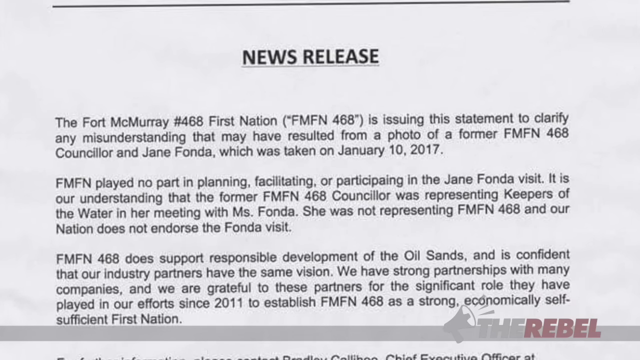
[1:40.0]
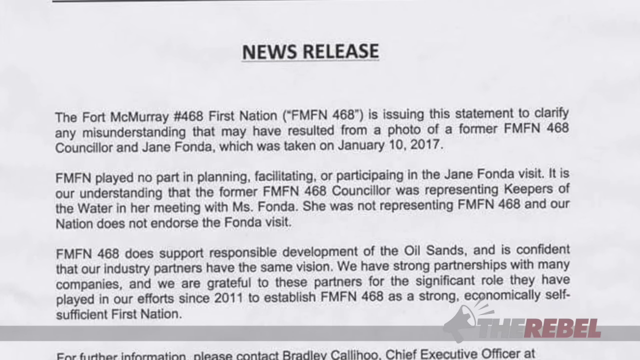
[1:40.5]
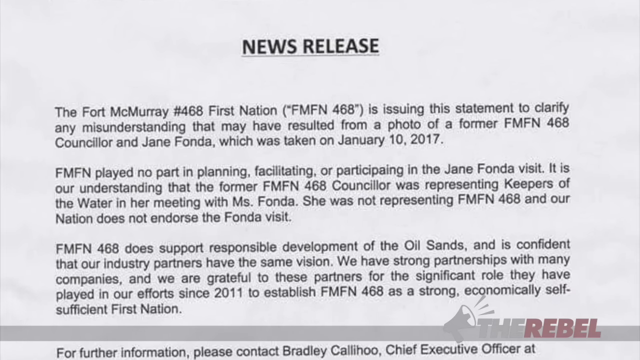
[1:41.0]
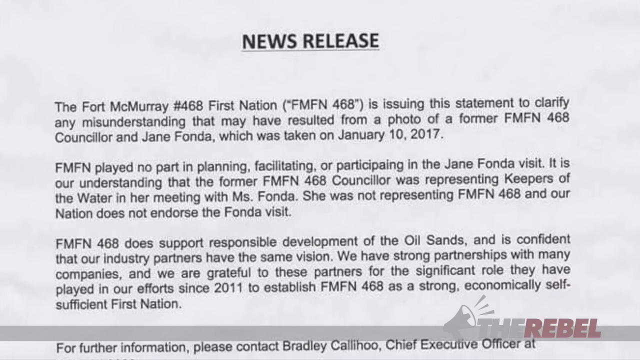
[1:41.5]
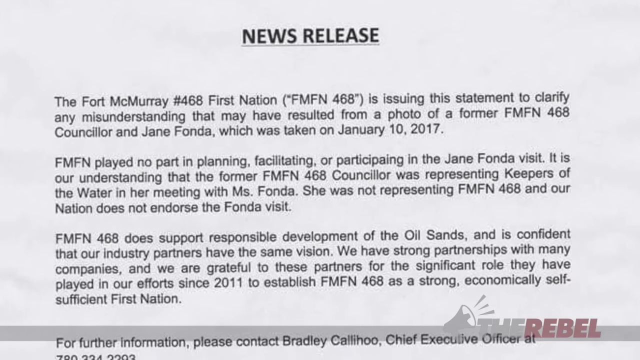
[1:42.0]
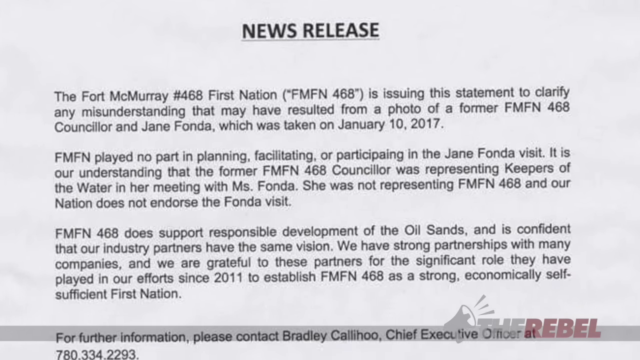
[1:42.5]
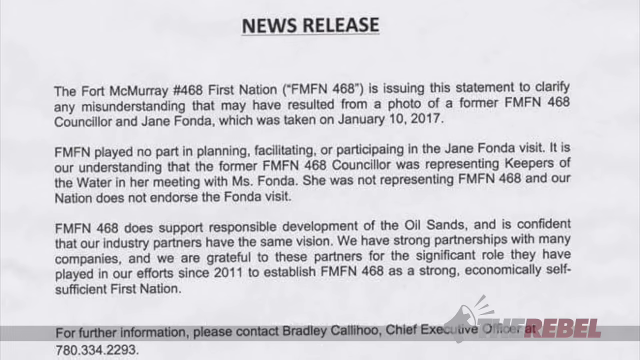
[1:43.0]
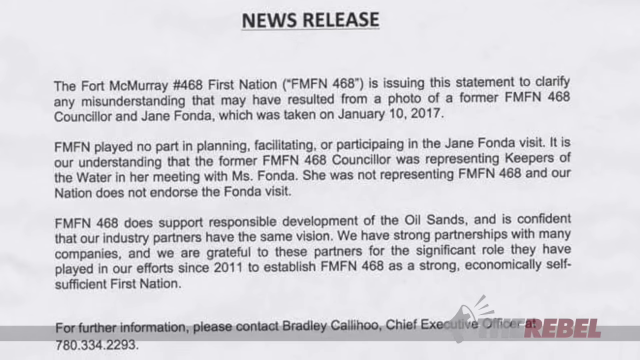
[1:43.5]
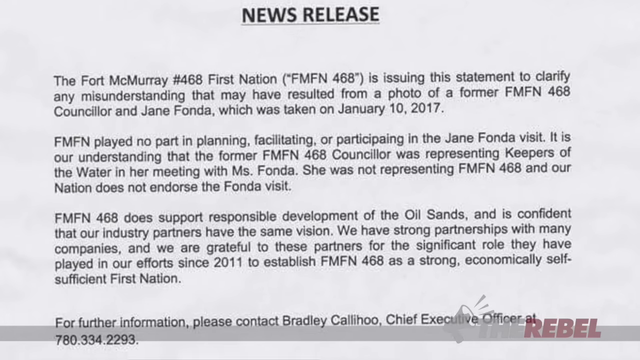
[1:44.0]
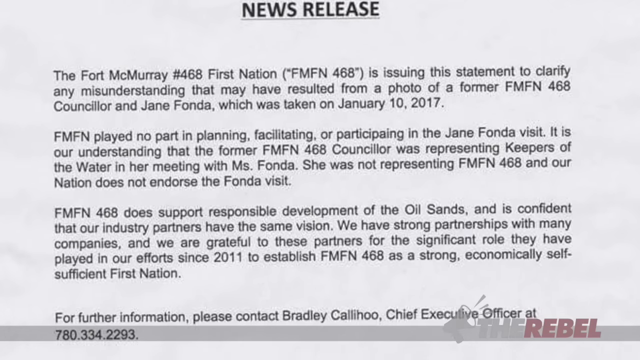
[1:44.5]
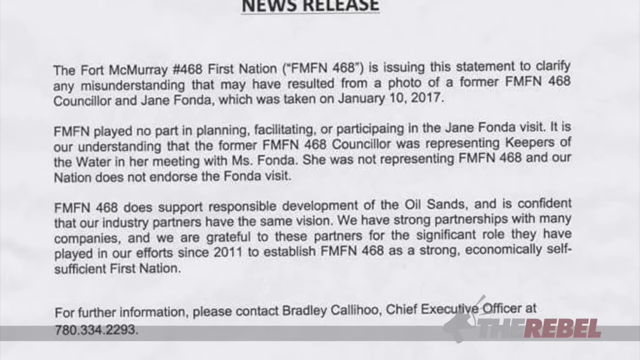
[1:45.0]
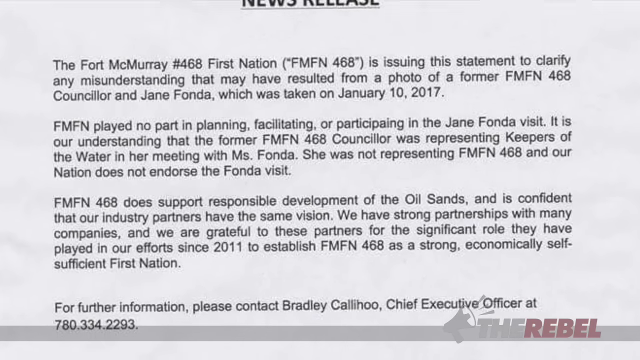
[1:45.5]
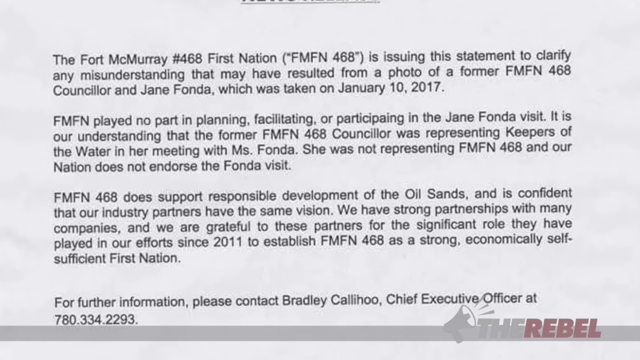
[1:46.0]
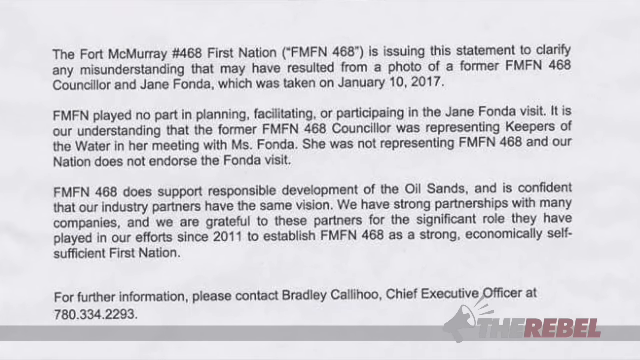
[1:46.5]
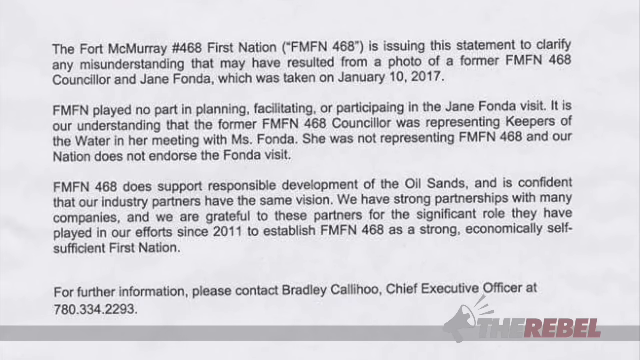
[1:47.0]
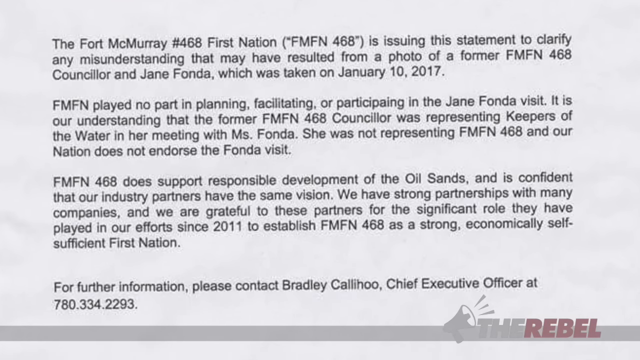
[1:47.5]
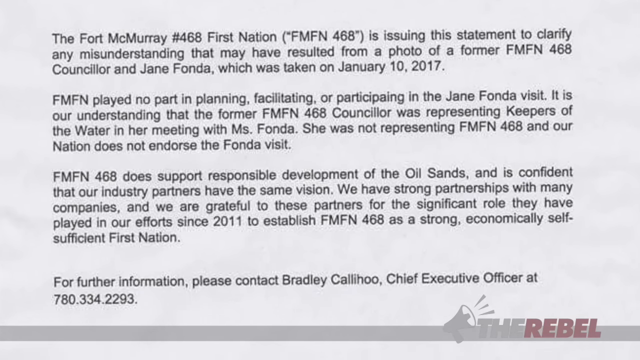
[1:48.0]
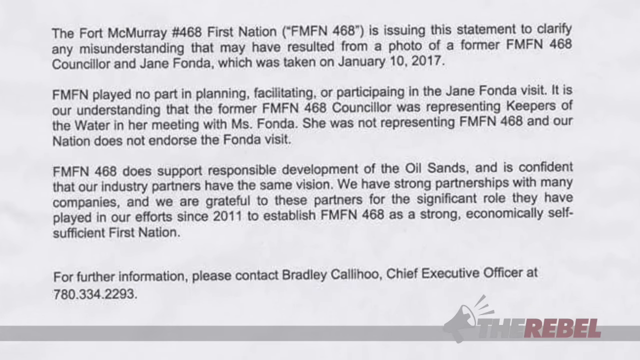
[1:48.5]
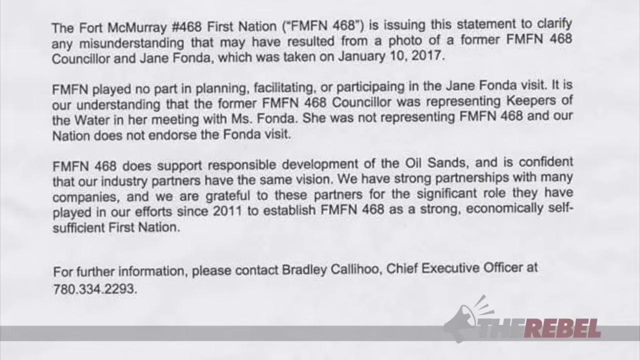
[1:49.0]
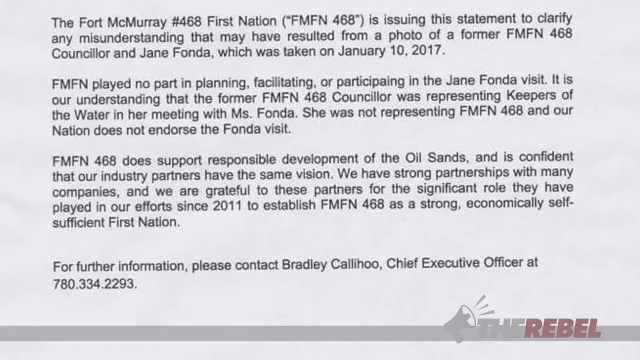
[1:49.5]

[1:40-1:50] The document continues, stating that FMFN 468 does support responsible development of the oil sands and is confident its industry partners have this ambition, that it has strong partnerships with many companies, and that it is grateful to these partners for the significant role they have played in its efforts since 2011 to establish FMFN 468 as a strong, economically self-sufficient First Nation. For further information it lists Bradley Kalihu, Chief Executive Officer, at 7803342293. The Rebel logo then appears in the bottom right of the screen with the amplifier icon right next to it.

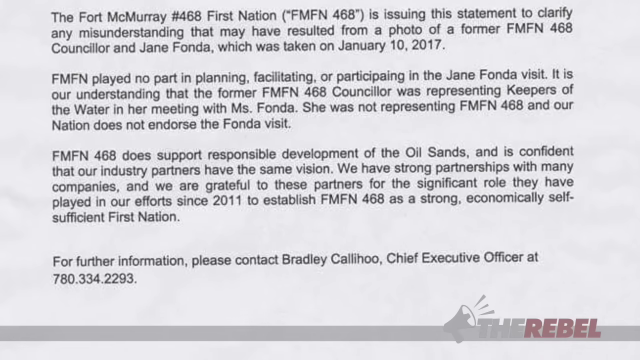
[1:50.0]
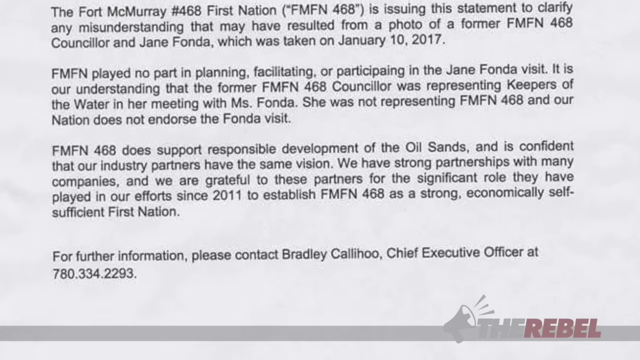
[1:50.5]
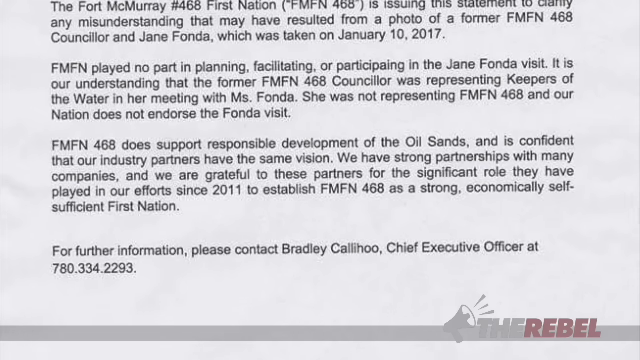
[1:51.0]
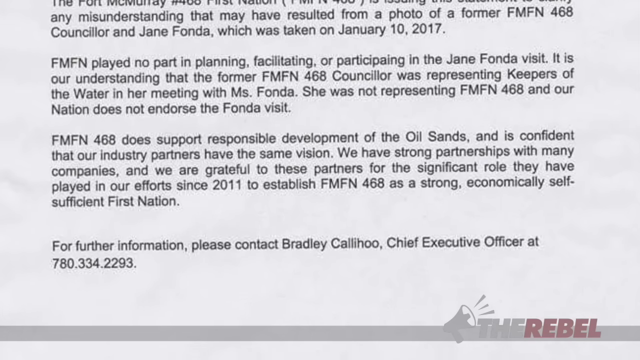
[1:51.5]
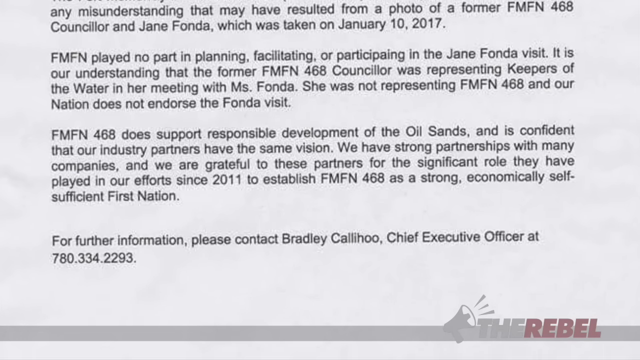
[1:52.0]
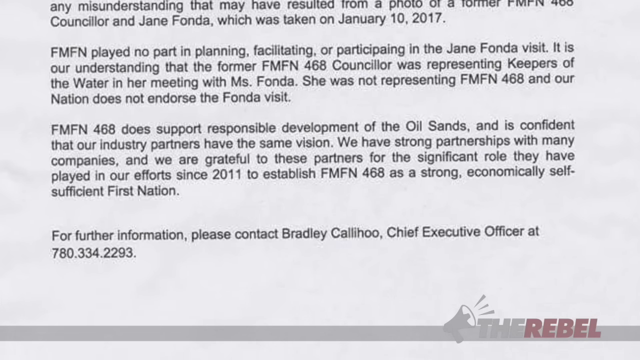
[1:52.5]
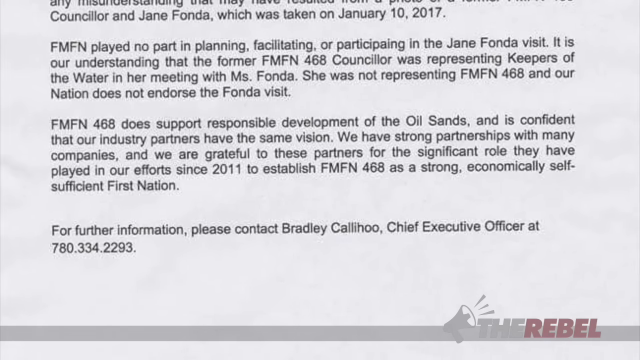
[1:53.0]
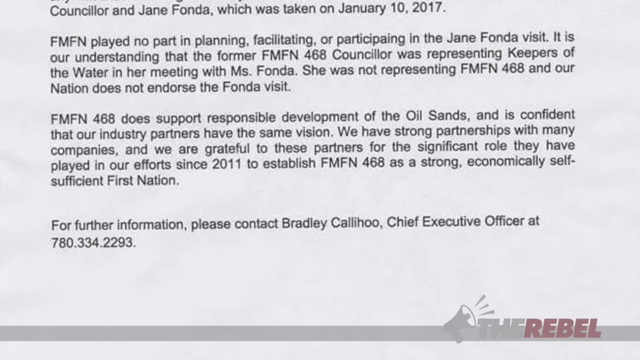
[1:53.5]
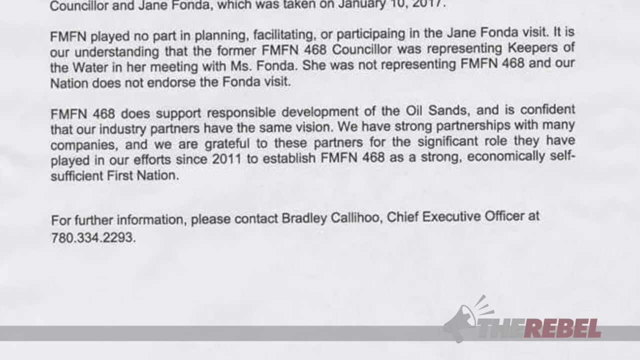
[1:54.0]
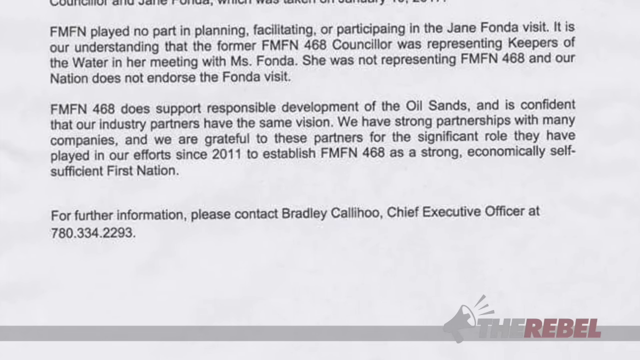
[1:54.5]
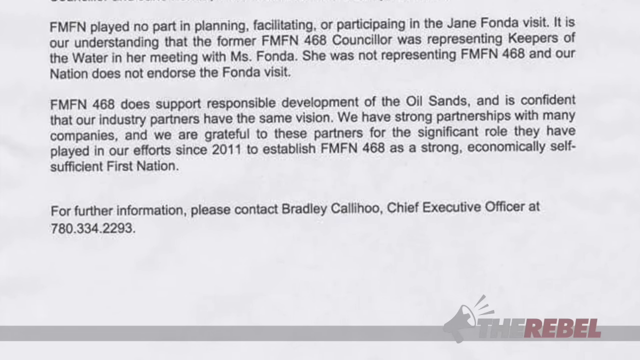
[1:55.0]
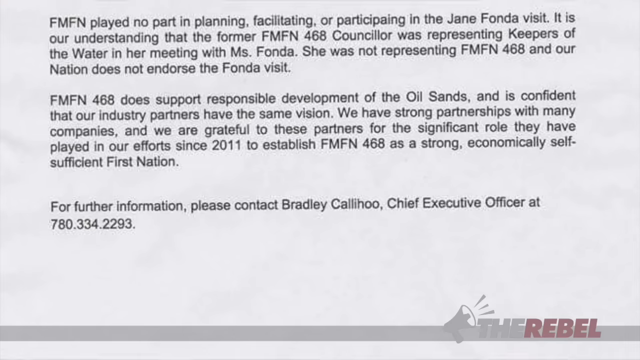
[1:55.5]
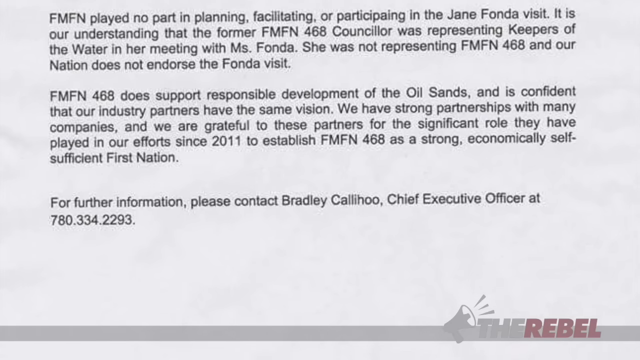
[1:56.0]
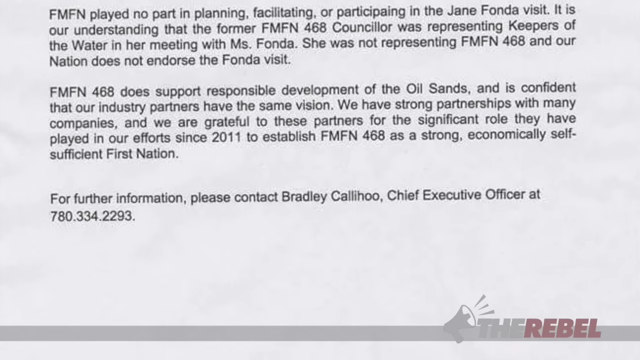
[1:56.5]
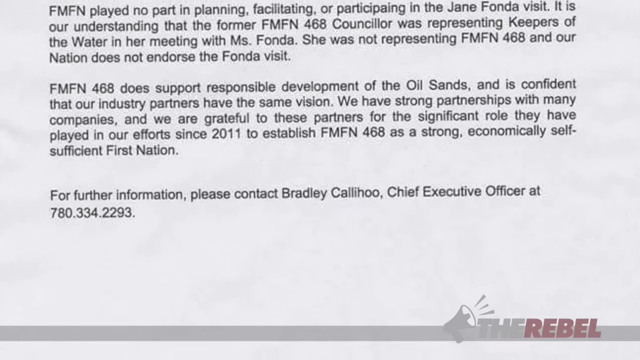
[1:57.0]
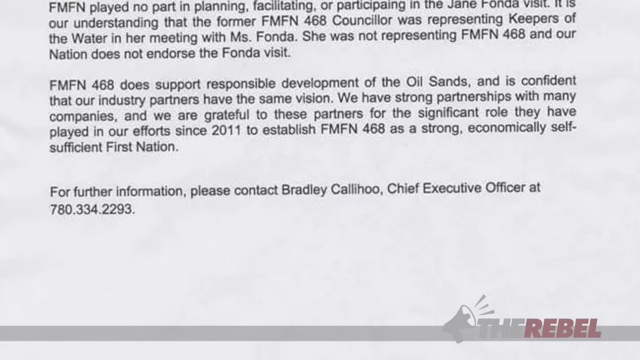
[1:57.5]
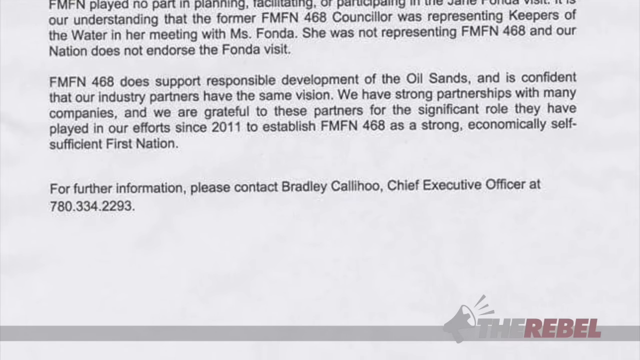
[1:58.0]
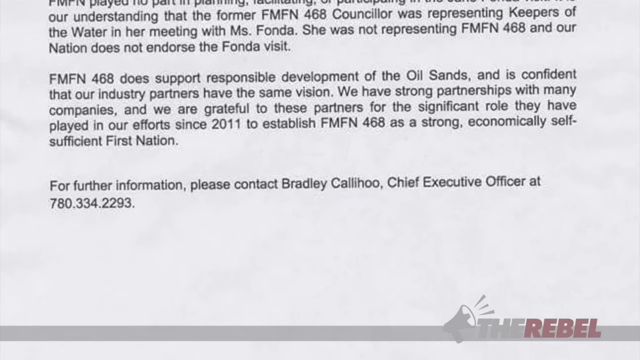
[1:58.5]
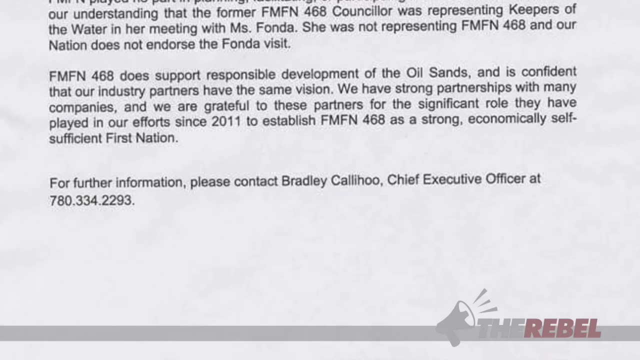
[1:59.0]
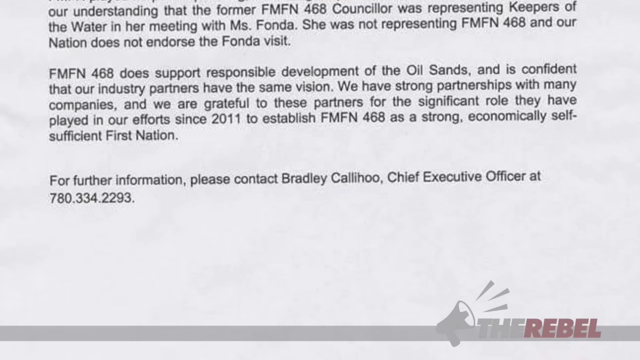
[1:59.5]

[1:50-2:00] The document remains on screen, reading that FMFN 468 does support responsible development of the oil sands and is confident that its industry partners have the same vision, that it has strong partnerships with many companies, and that it is grateful to these partners for the significant role they have played in its efforts since 2011 to establish FMFN 468 as a strong, economically self-sufficient First Nation. It then gives a contact for further information, Bradley Calihoo, Chief Executive Officer, with the number "780-334-2293".